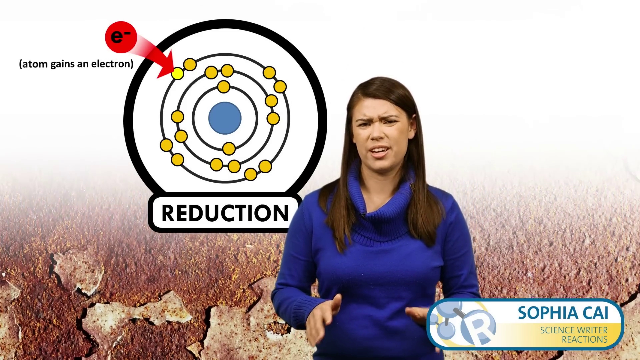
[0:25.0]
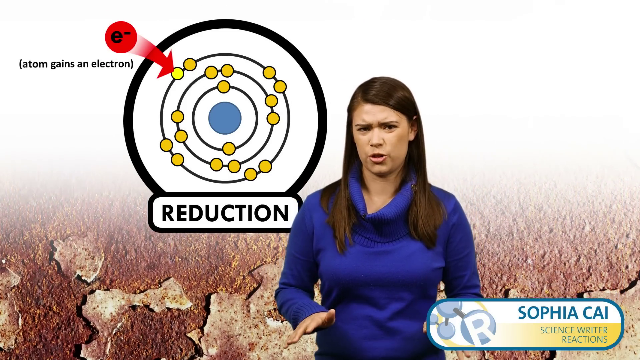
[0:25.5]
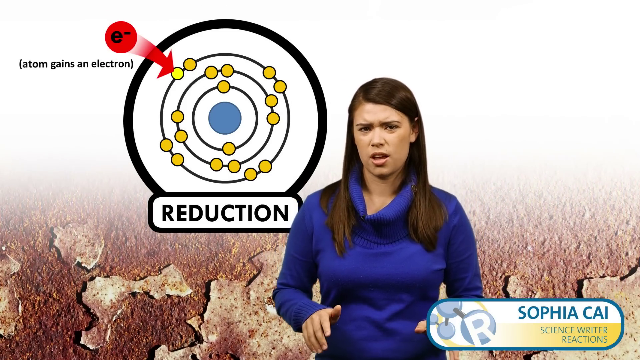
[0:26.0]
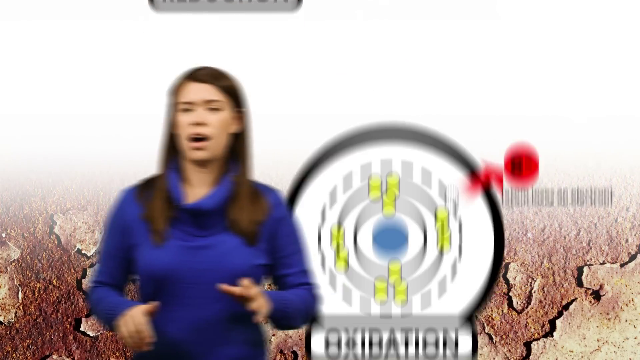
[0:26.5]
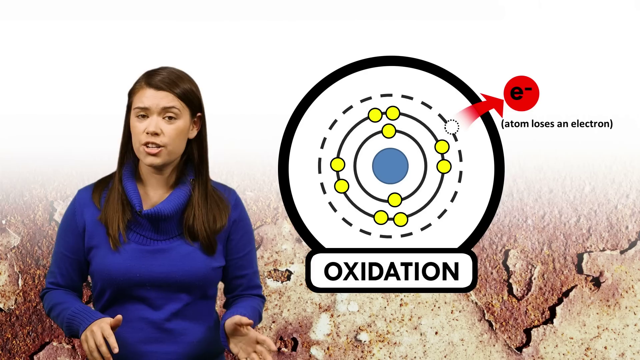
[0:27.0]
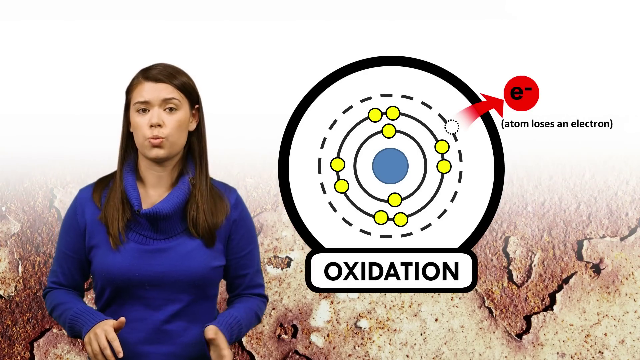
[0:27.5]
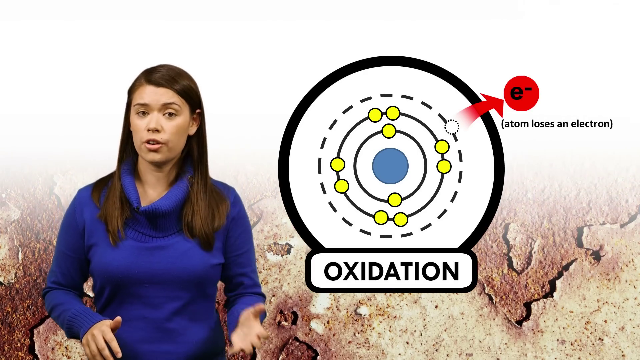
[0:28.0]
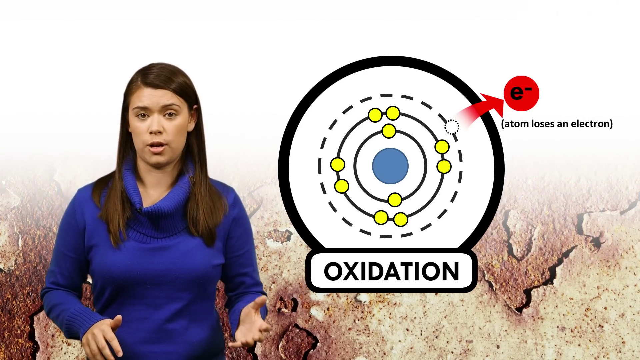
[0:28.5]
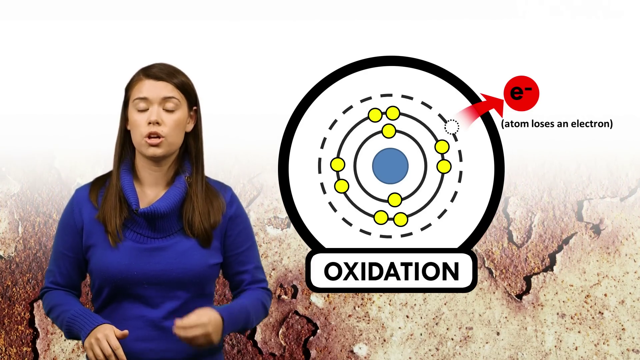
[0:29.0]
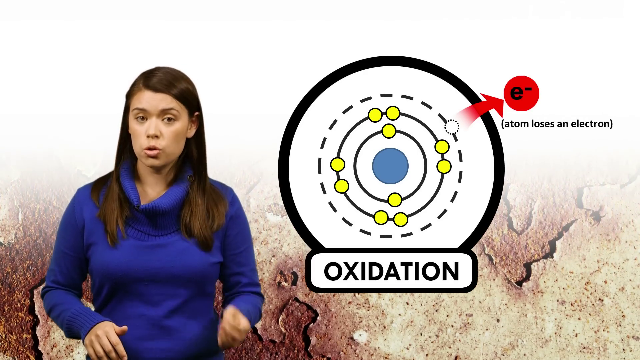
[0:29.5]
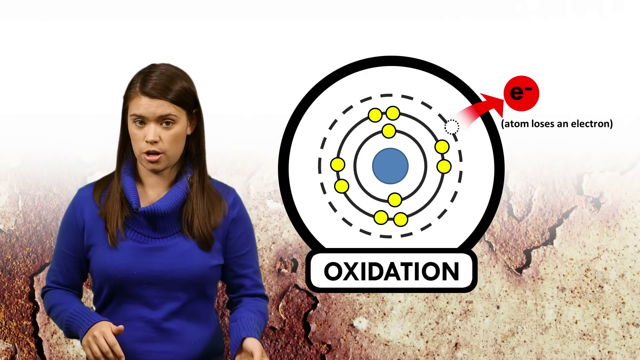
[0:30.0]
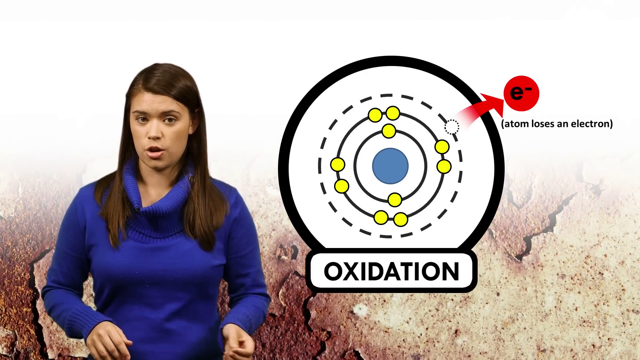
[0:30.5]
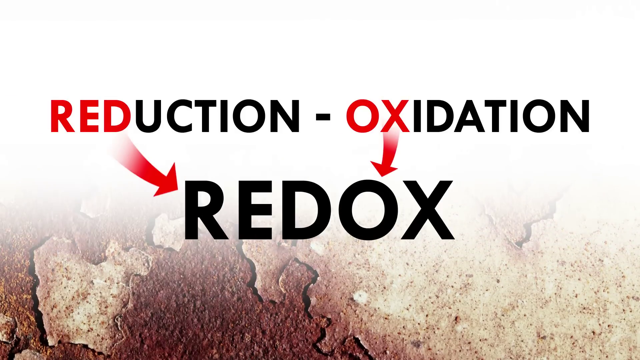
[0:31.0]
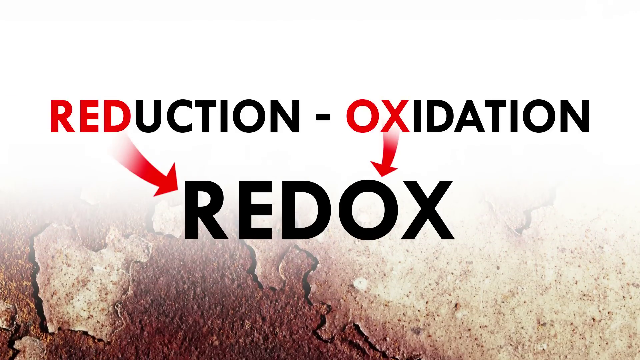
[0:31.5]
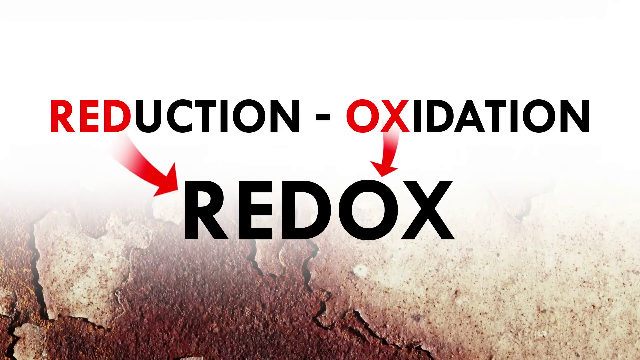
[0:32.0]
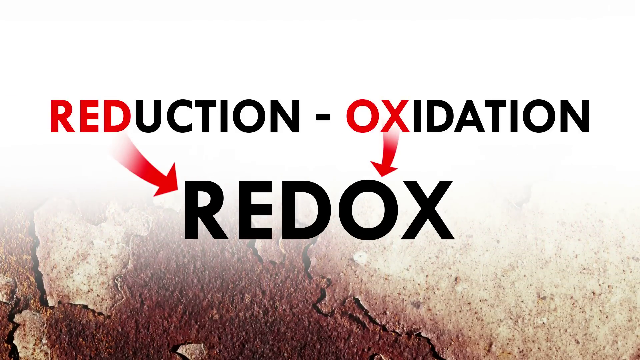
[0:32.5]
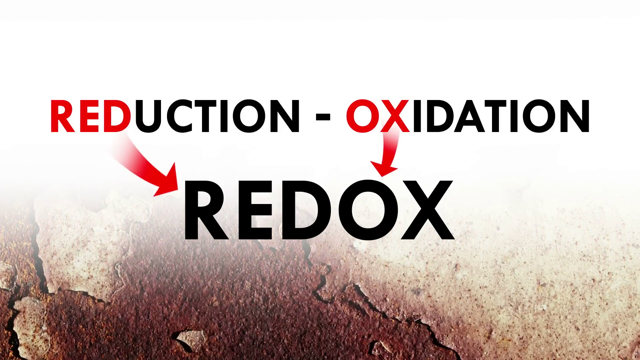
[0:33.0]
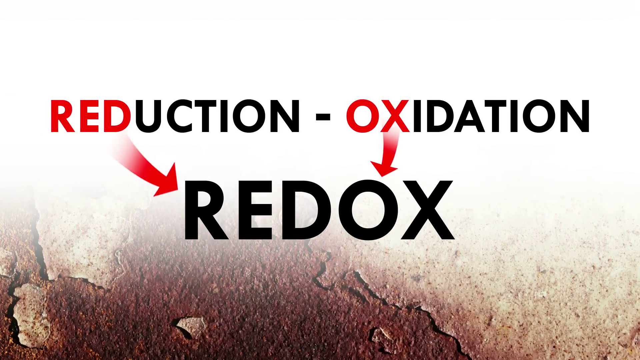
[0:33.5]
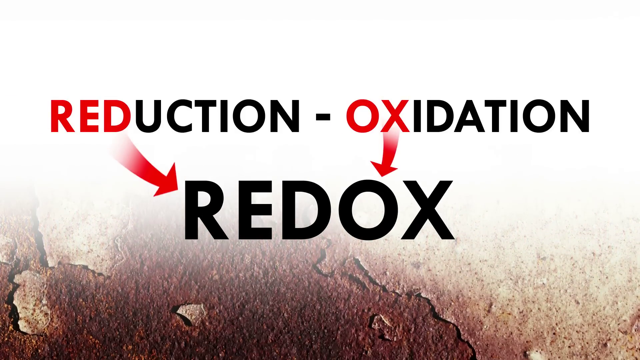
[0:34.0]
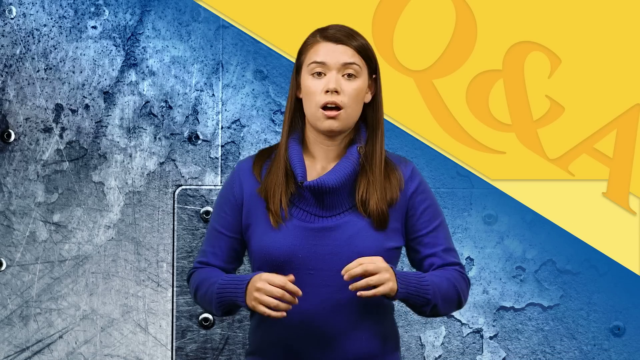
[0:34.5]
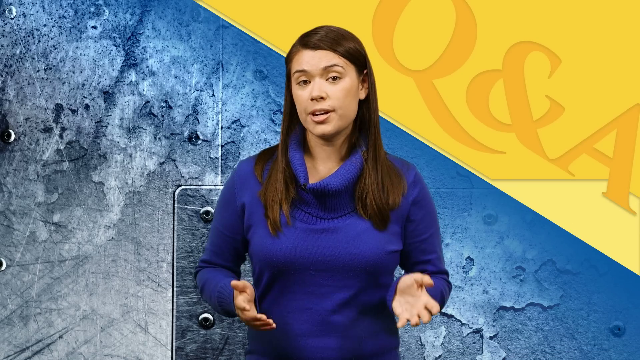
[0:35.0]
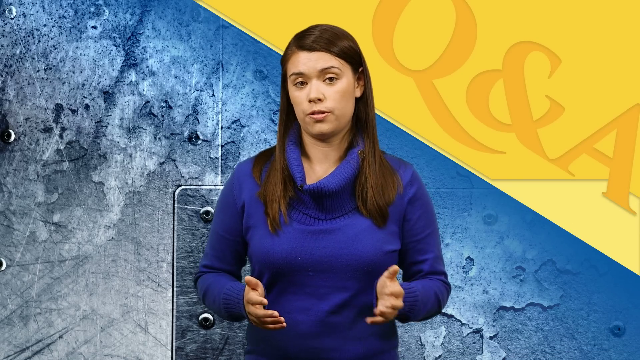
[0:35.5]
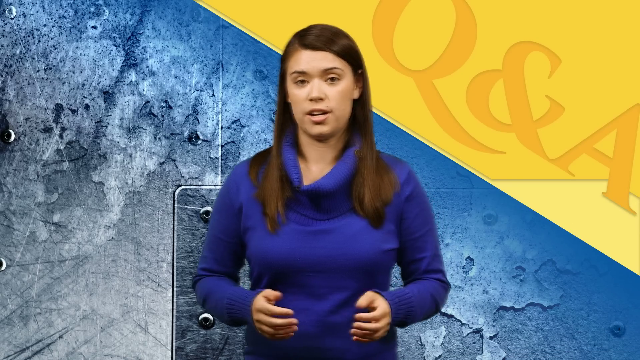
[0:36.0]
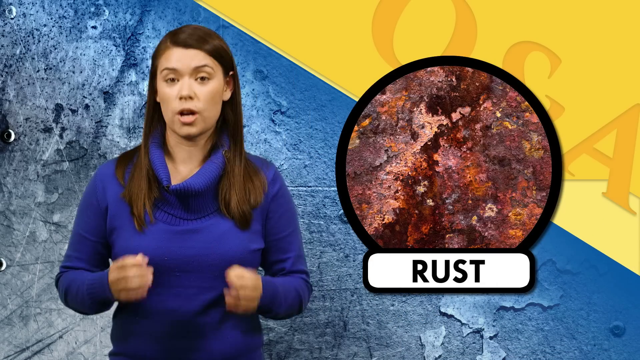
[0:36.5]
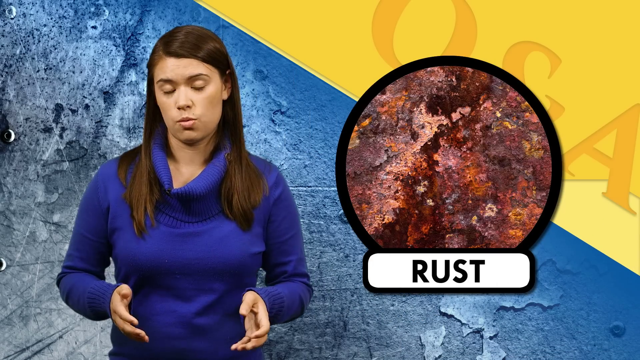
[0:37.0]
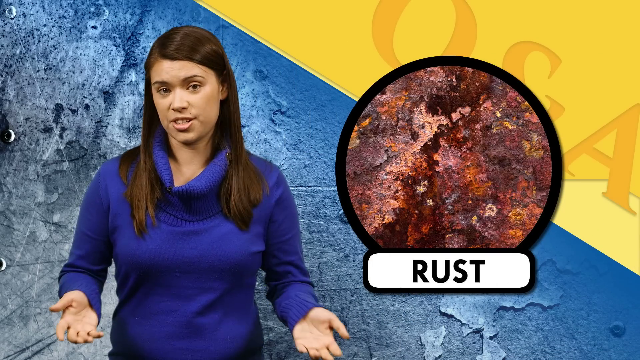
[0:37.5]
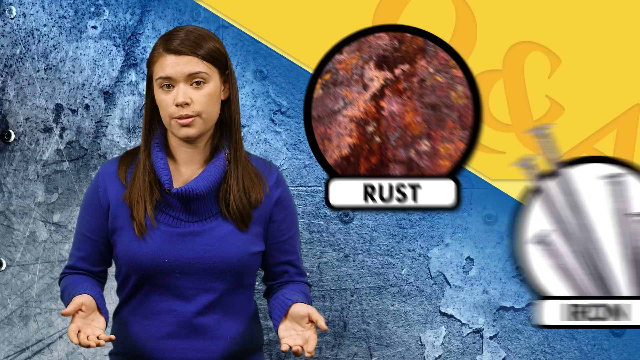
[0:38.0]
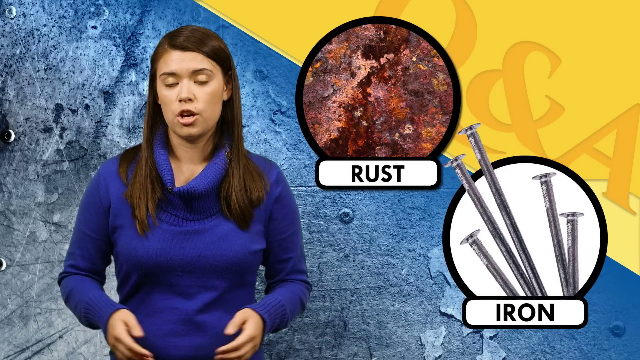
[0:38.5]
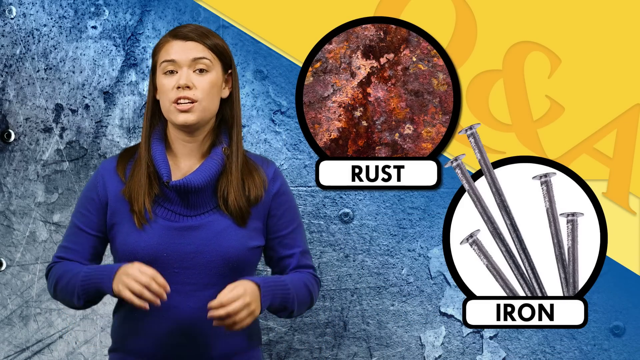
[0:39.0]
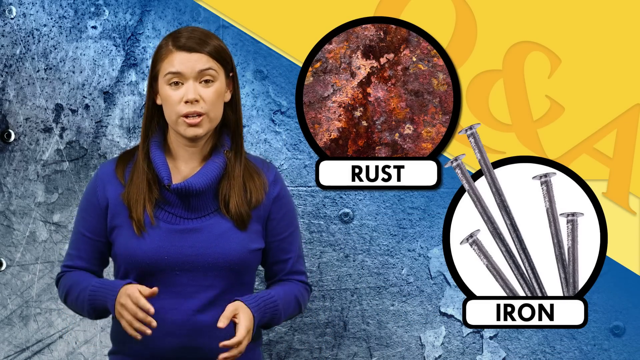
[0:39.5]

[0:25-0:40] Sophia appears with bullseyes behind her and moves to the other side of where she was standing. The words for the reduction reaction remain, and Sophia comes back with a white, blue and yellow background with "Q&A" behind her. She moves to one side and the bullseye moves over. Sophia wears a purple turtleneck. The words "reduction", "oxidation" and "redox" show how the word redox comes from combining the letters of those words. There is a picture of rust and a picture of nails, which are iron. A red arrow points away from the bullseye to a lowercase "e". The background has diamond shapes in blue and in yellow. The graphic indicates an atom losing an electron, as part of the process of rust development.